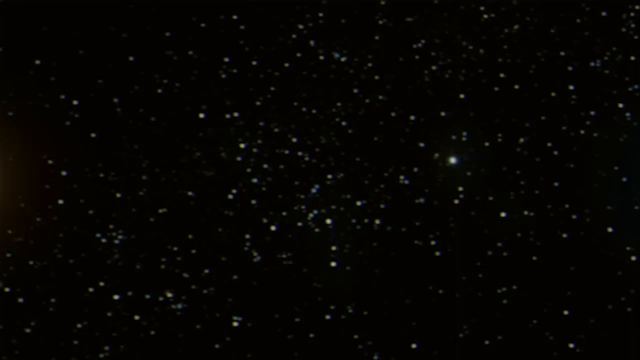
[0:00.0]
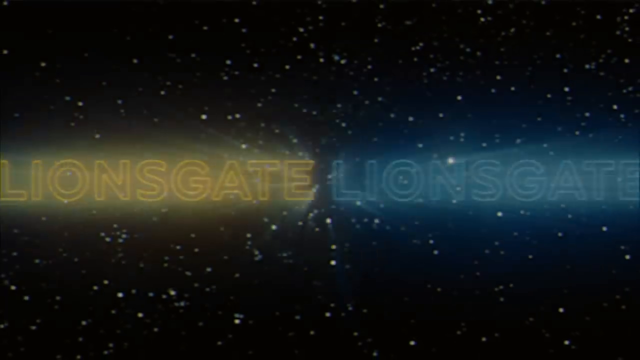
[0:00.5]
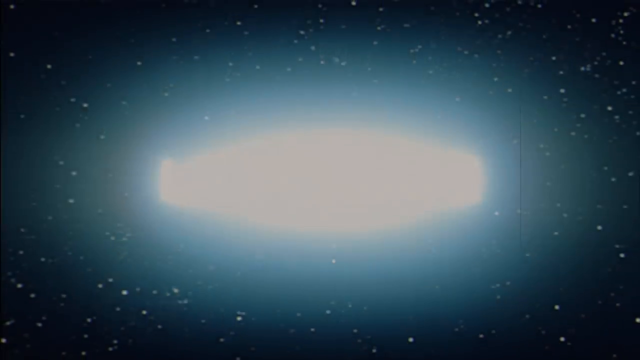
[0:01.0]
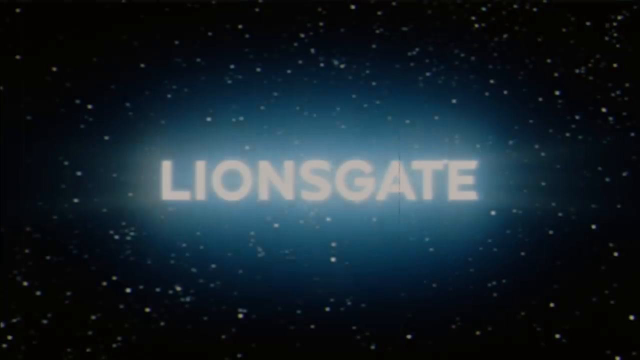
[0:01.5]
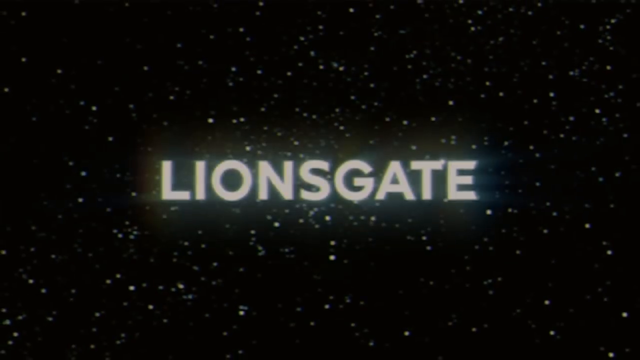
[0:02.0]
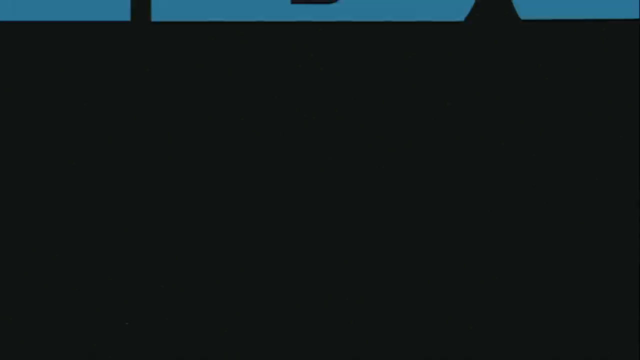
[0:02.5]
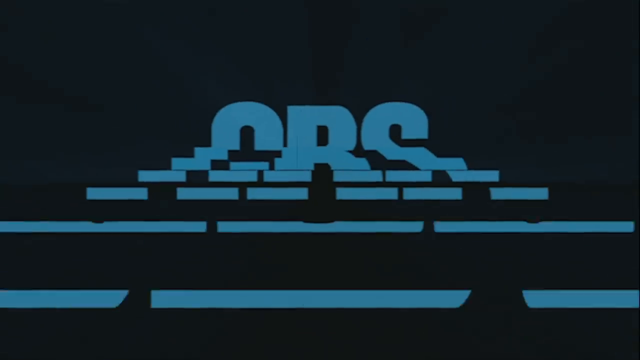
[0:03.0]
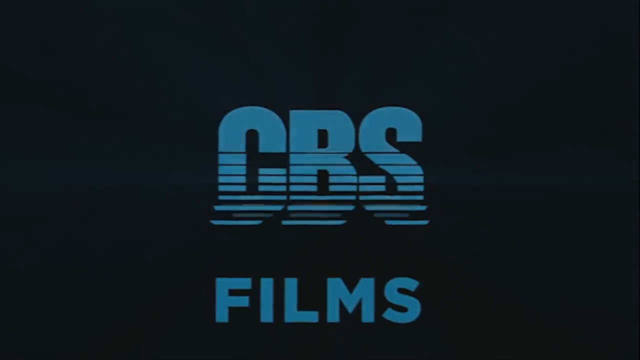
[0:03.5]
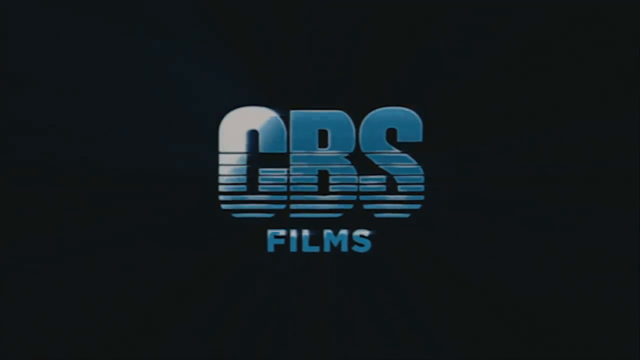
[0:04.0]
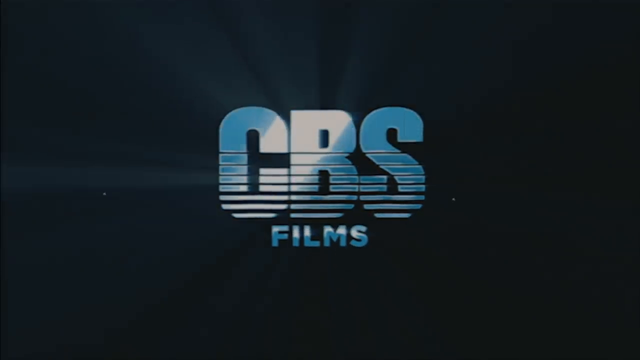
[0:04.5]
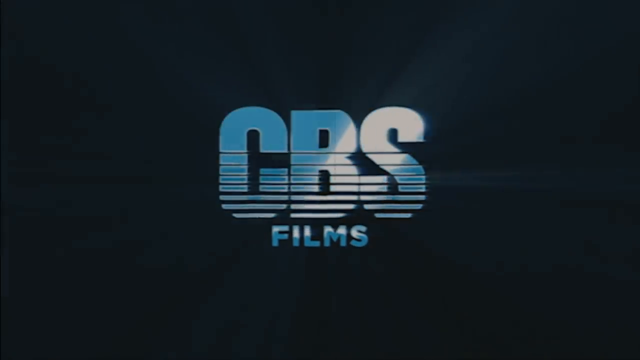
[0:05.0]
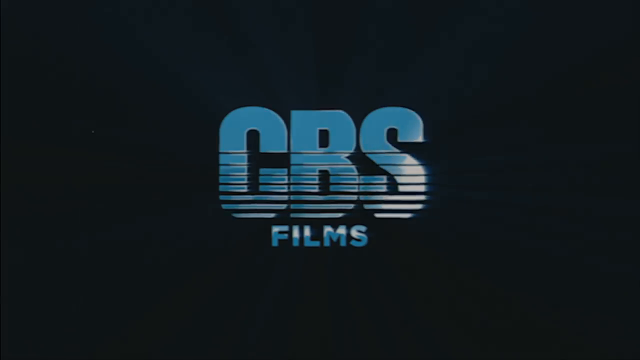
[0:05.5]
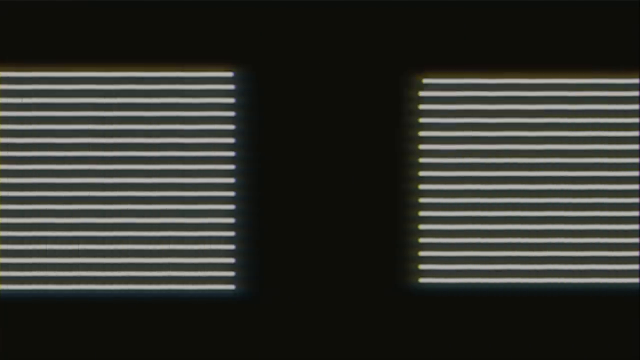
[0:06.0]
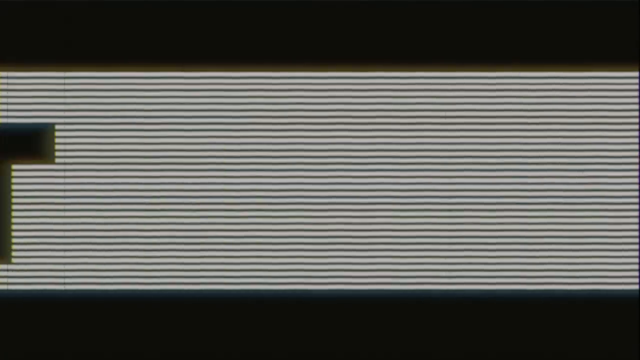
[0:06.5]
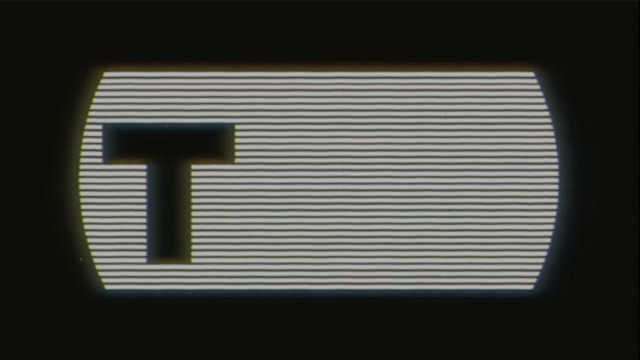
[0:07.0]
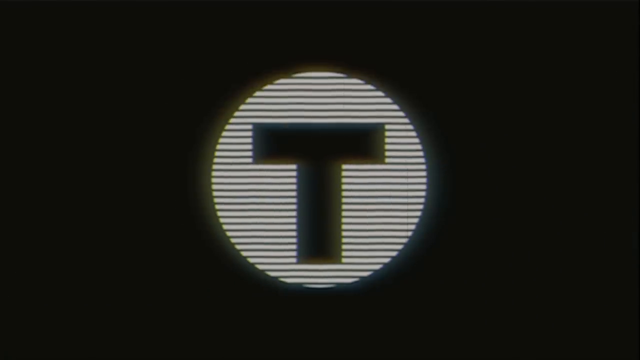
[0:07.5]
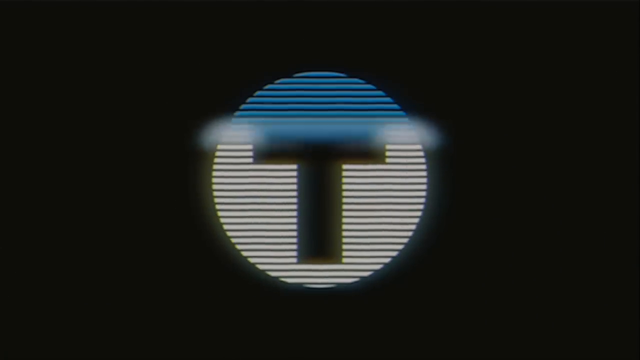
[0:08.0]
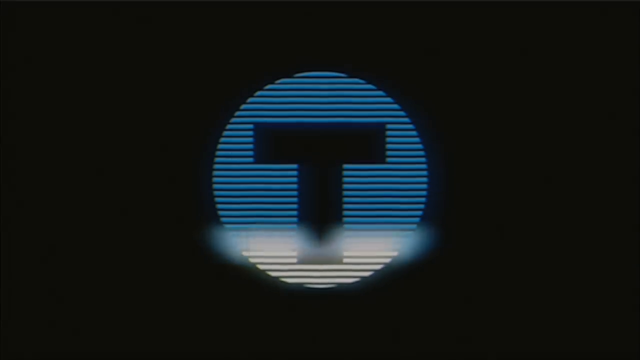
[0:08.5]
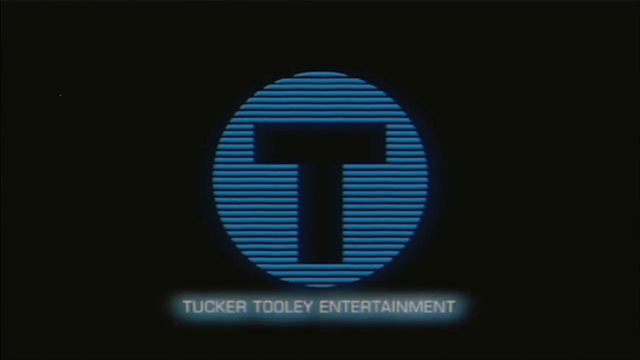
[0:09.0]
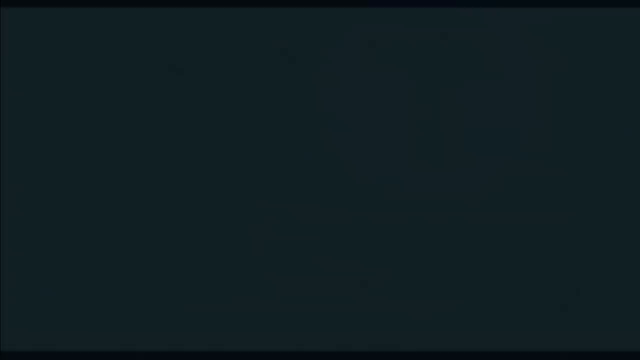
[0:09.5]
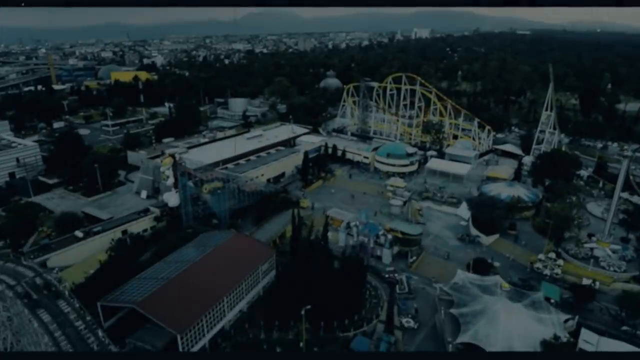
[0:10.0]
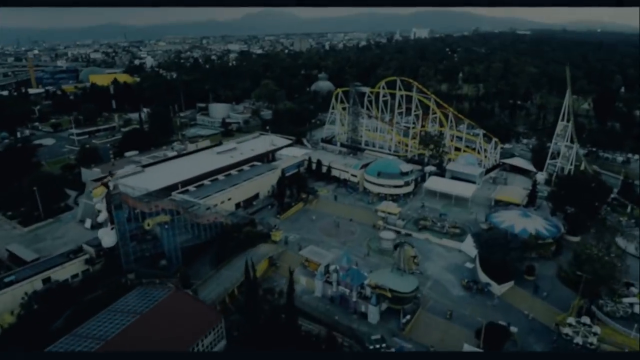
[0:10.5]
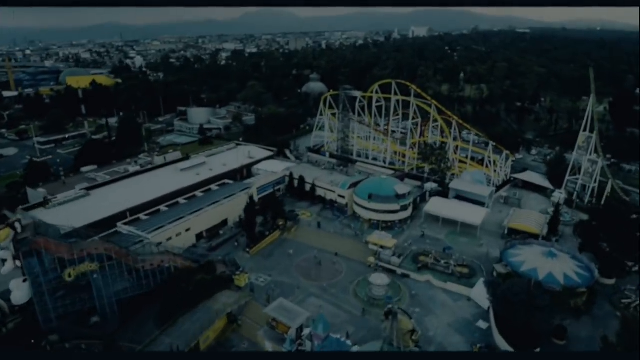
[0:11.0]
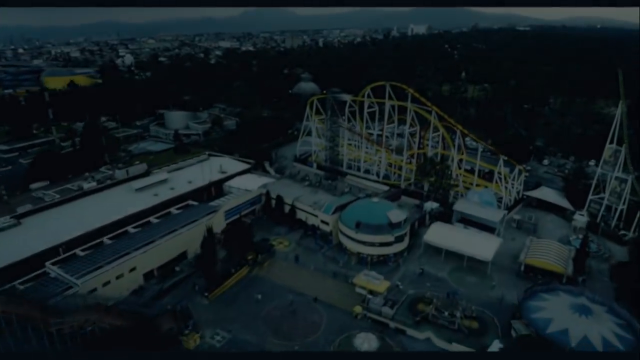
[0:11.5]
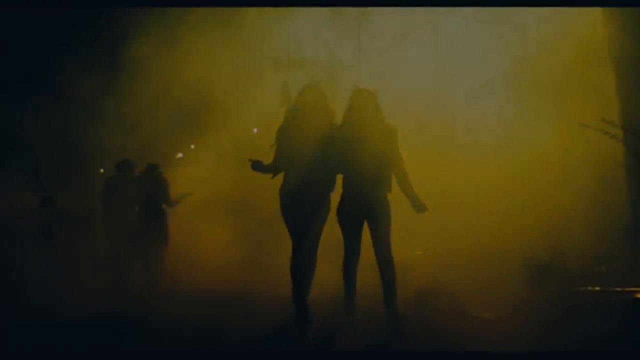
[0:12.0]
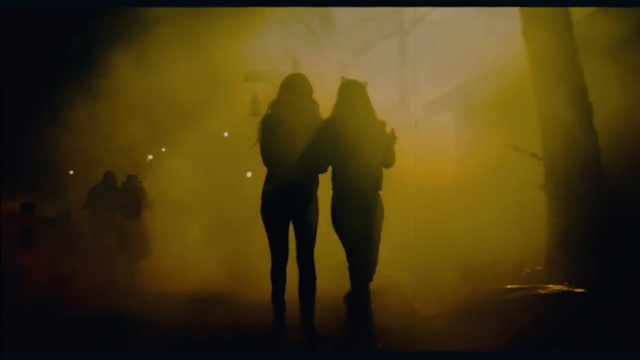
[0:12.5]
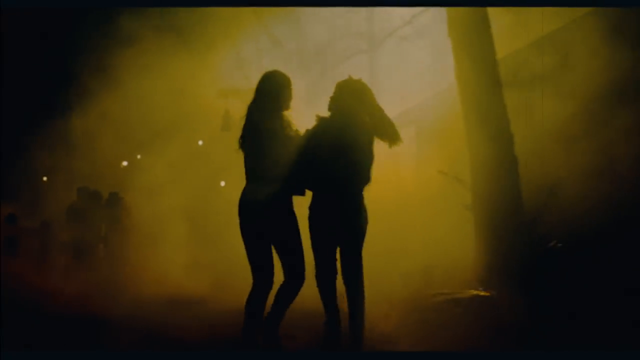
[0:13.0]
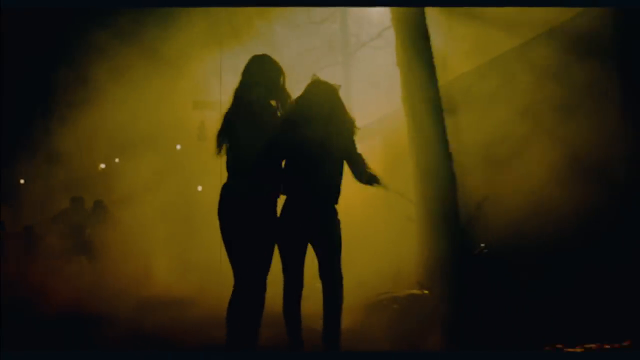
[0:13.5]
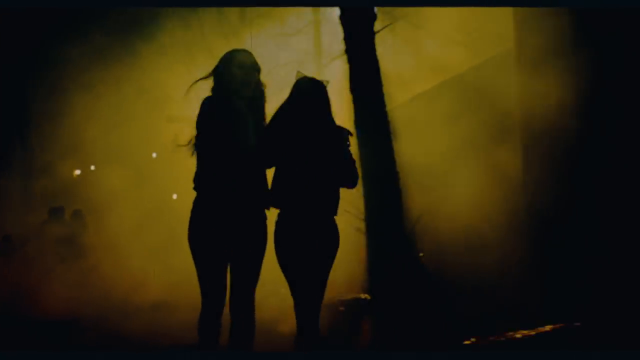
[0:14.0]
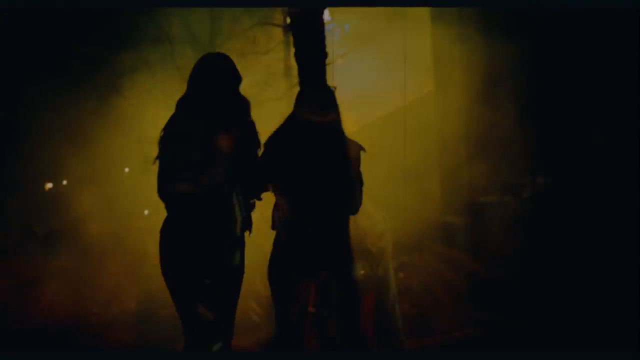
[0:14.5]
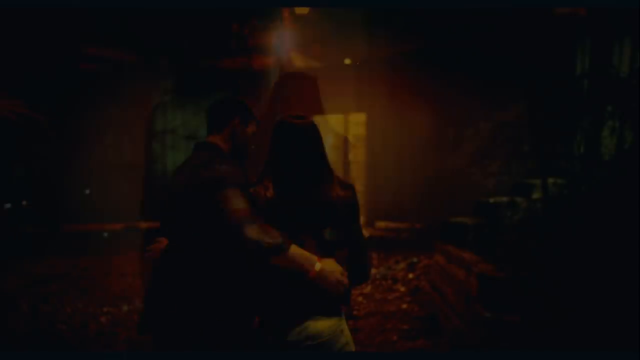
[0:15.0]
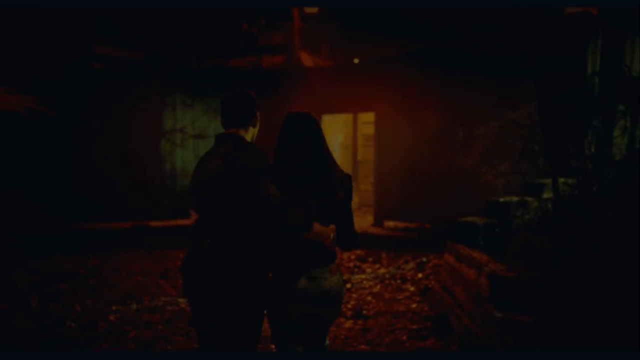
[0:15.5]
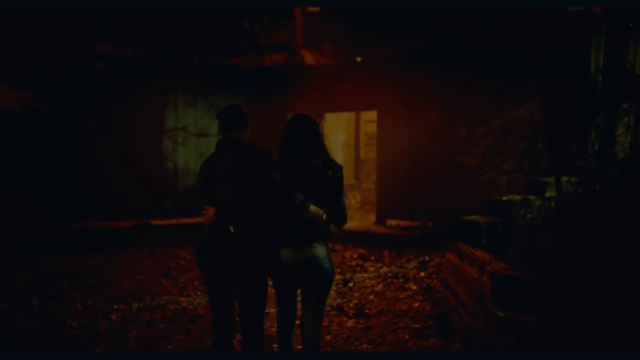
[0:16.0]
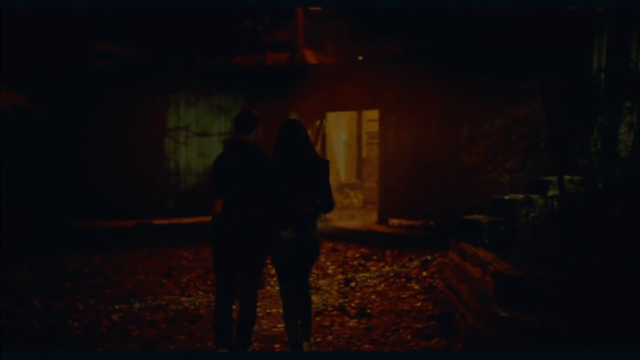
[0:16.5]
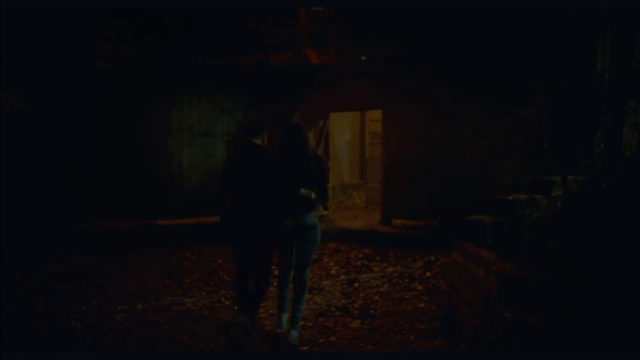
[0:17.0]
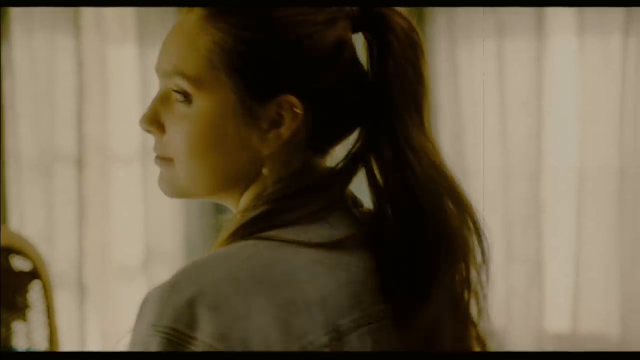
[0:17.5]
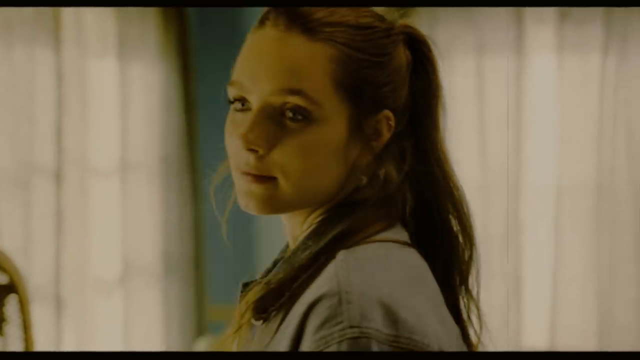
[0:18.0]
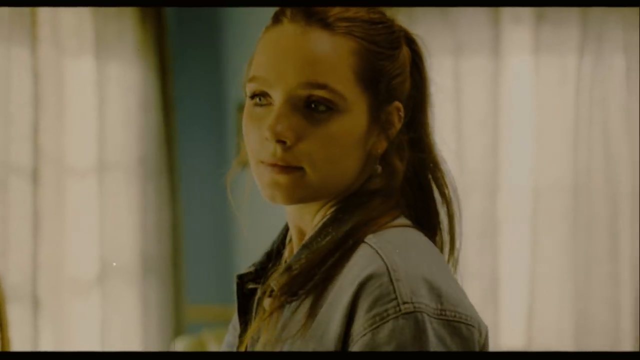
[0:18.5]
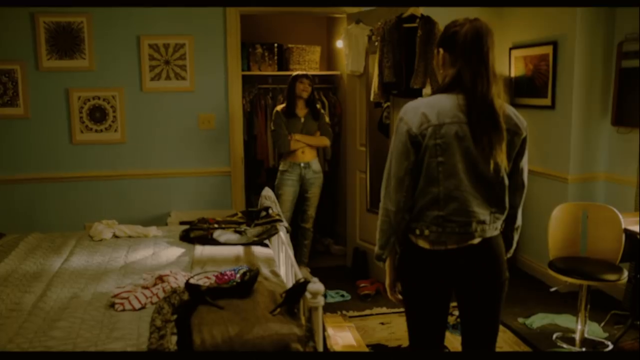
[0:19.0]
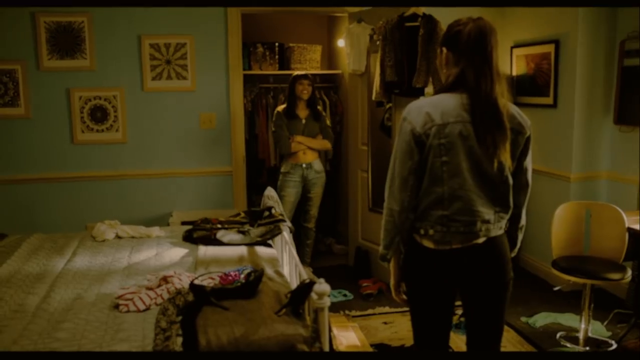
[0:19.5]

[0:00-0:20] What seems to be a film opens with the Lionsgate logo: space full of stars appears, and the word Lionsgate comes in from the left and the right and forms as one in the middle. Next, "CBS Films" appears; the tops of the C, B and S are solid, while lower down the letters are formed by a bunch of broken lines with kind of lights going through them. A bunch of lines then come onto the screen, go off and come back in, and start to form a T in the middle of a circle, with the text "Tucker Todd Lee Entertainment". What seems to be an aerial view of a theme park follows, which looks like it is from the 70s. It then looks dark out as two girls walk, kind of stop to look behind them, and appear to pick up their pace. The scene switches to an interior, where a young, pretty girl is standing where there are a bunch of windows; she appears to be talking to a girl who is standing in a doorway.